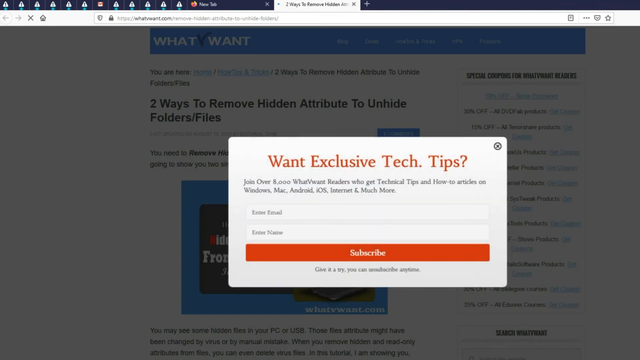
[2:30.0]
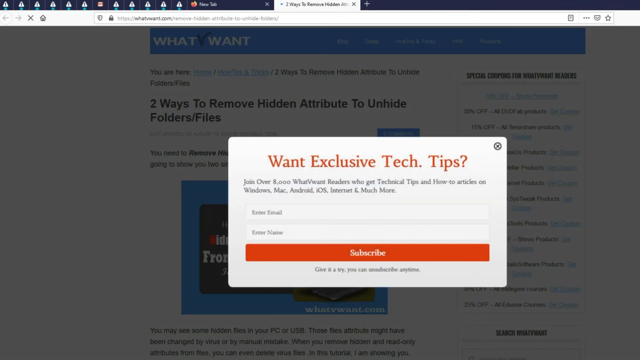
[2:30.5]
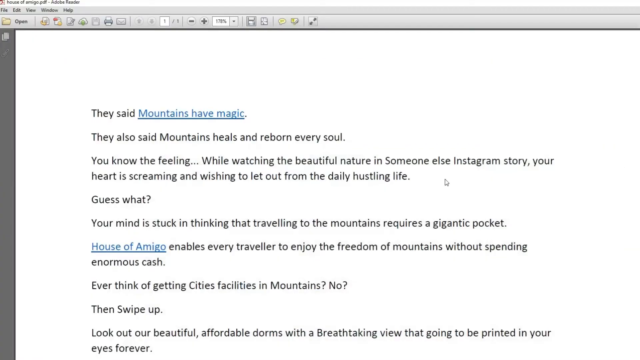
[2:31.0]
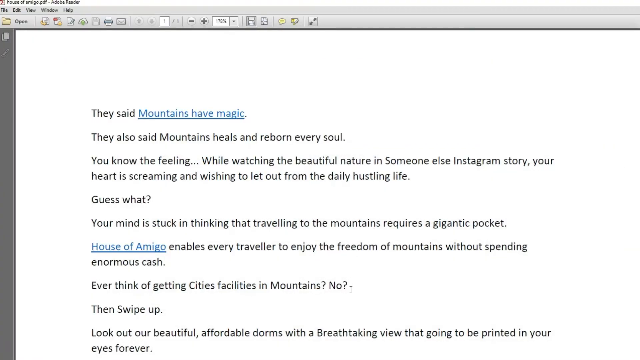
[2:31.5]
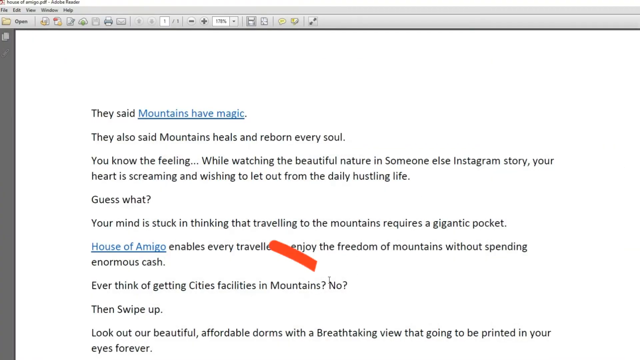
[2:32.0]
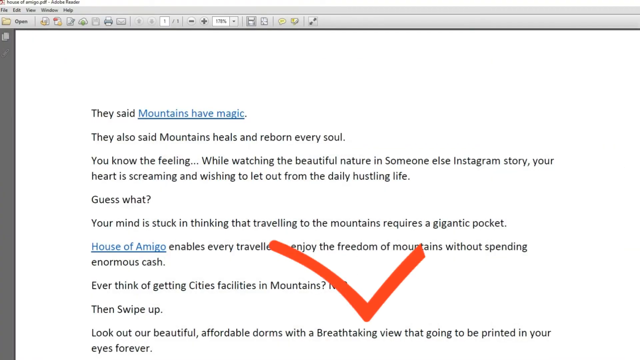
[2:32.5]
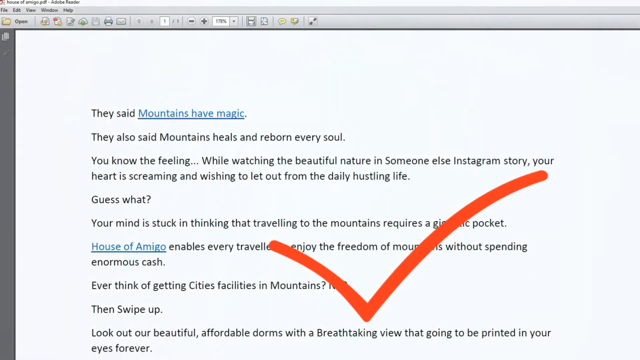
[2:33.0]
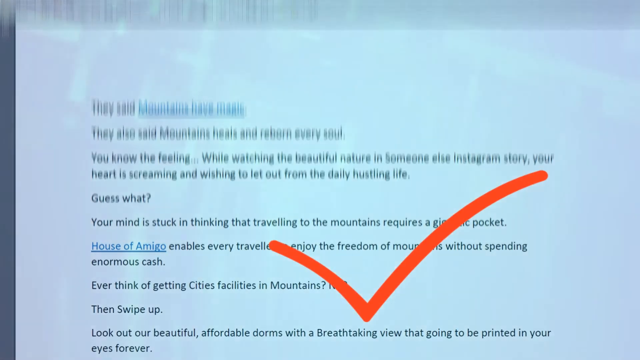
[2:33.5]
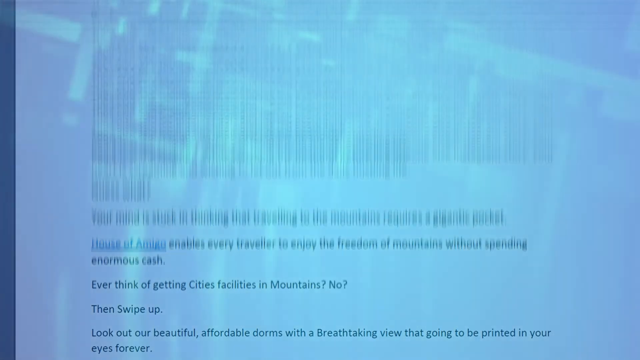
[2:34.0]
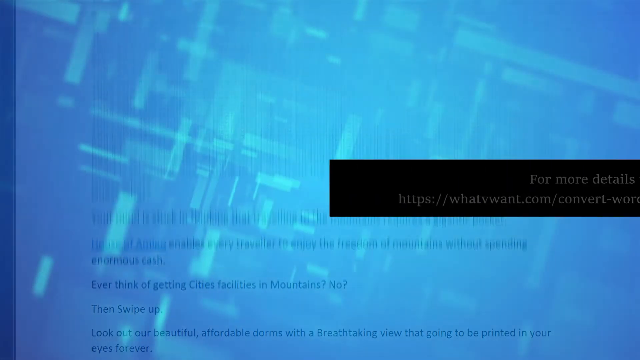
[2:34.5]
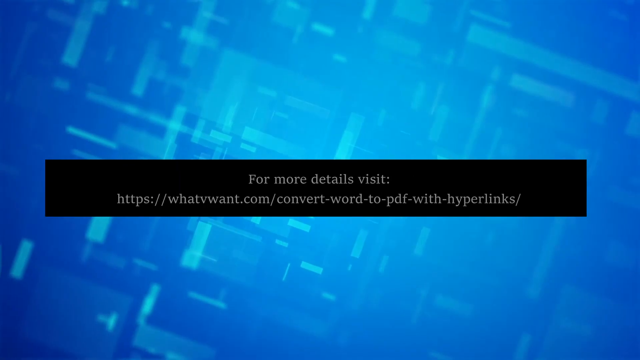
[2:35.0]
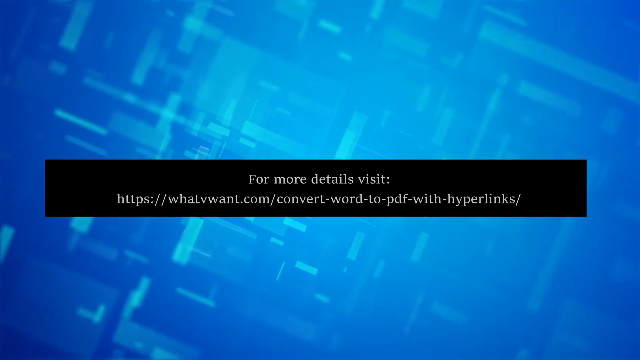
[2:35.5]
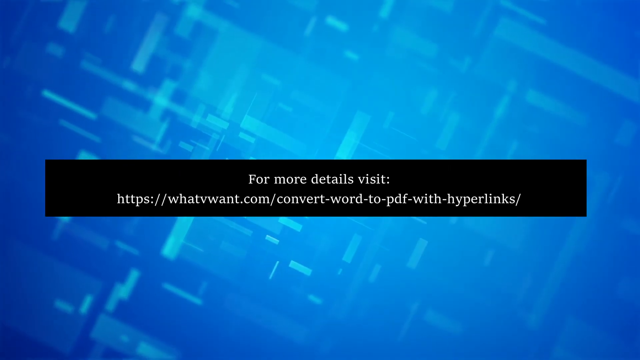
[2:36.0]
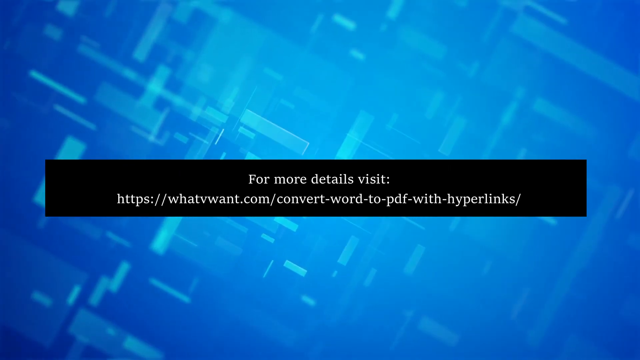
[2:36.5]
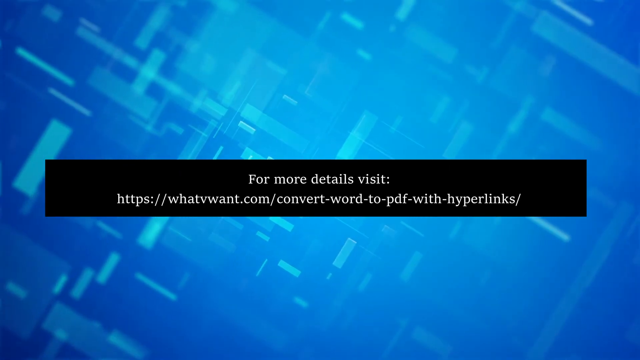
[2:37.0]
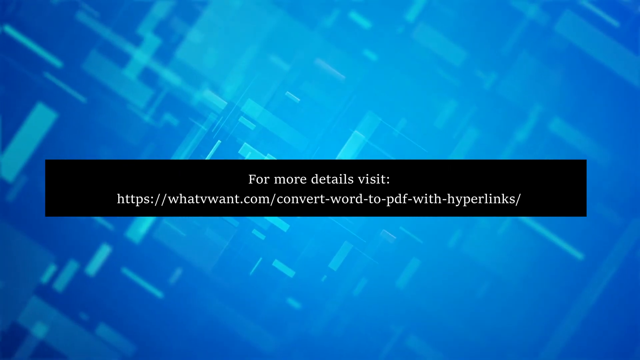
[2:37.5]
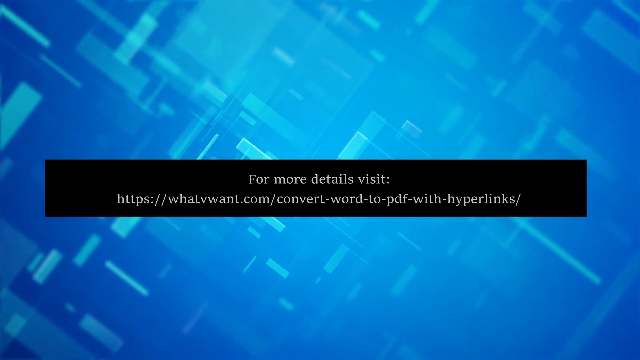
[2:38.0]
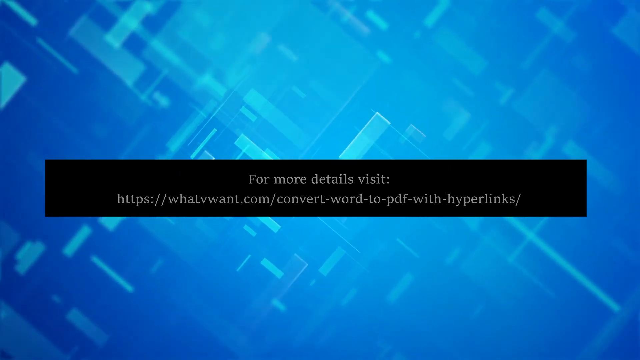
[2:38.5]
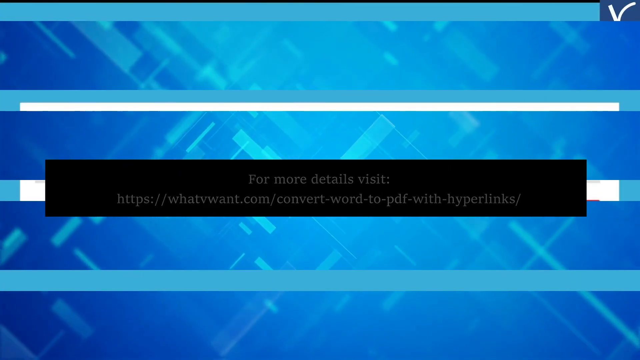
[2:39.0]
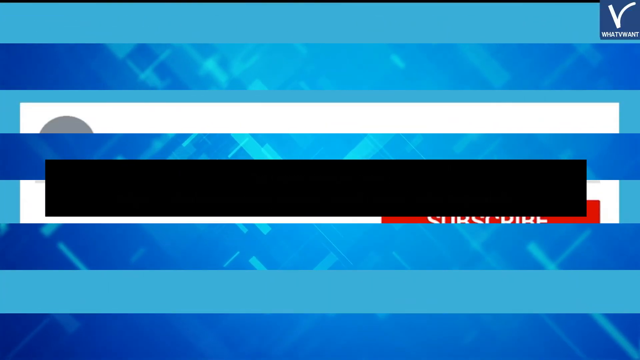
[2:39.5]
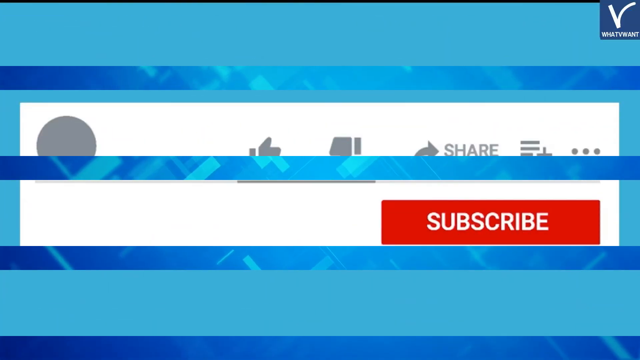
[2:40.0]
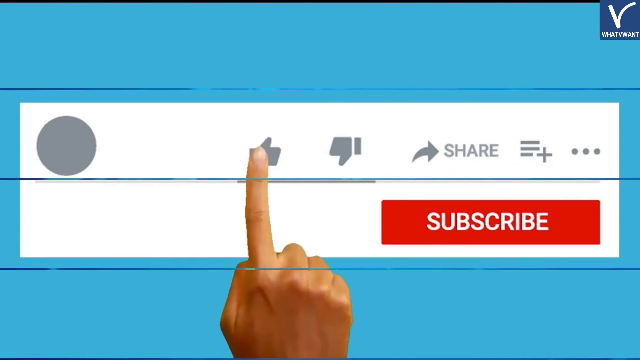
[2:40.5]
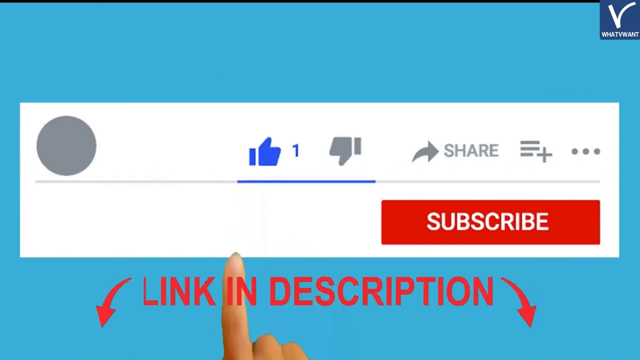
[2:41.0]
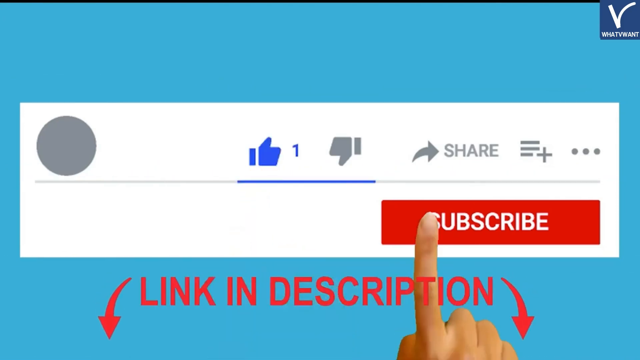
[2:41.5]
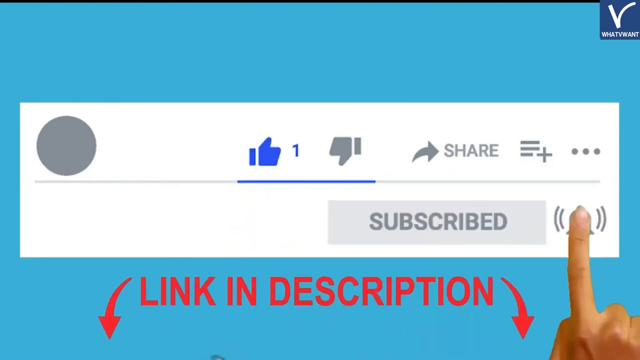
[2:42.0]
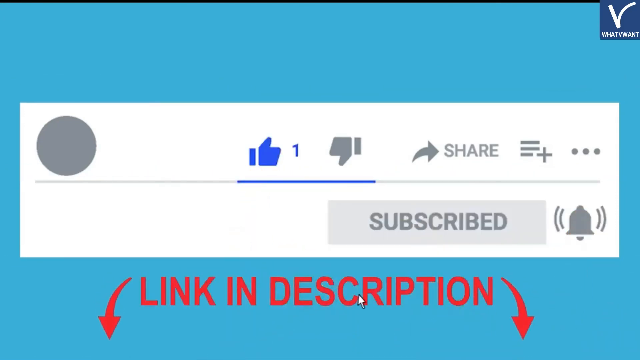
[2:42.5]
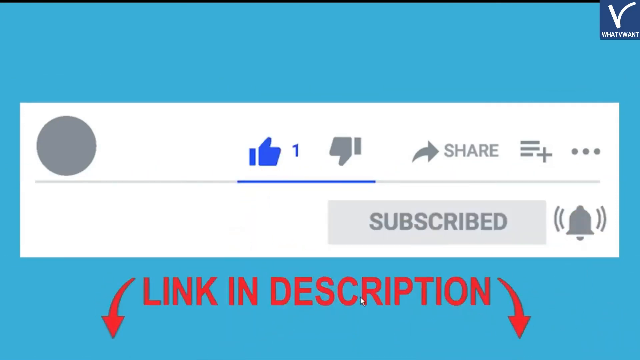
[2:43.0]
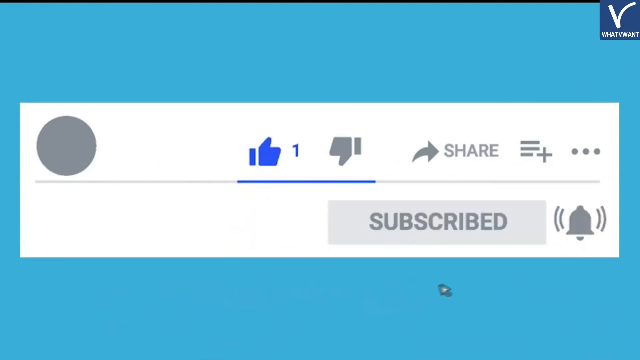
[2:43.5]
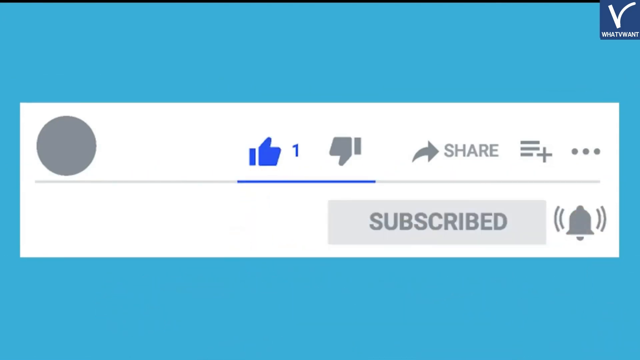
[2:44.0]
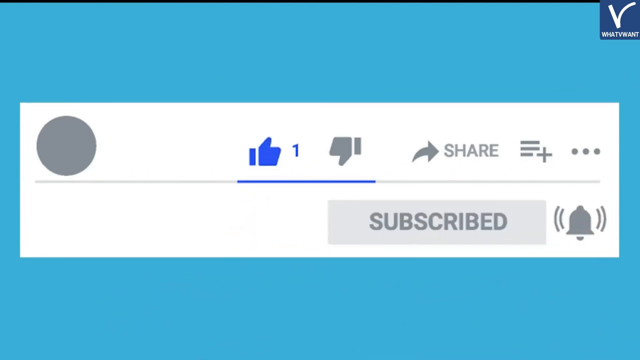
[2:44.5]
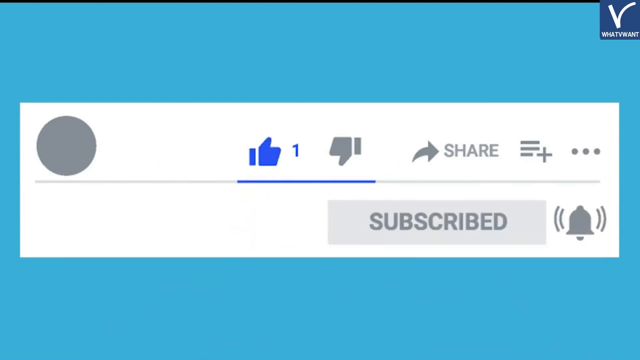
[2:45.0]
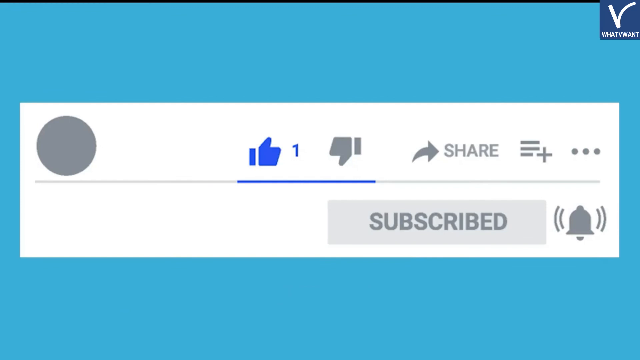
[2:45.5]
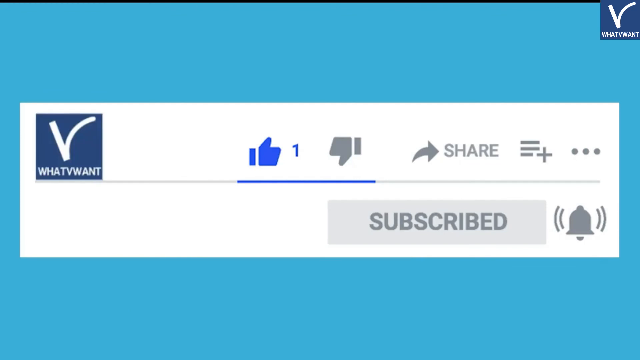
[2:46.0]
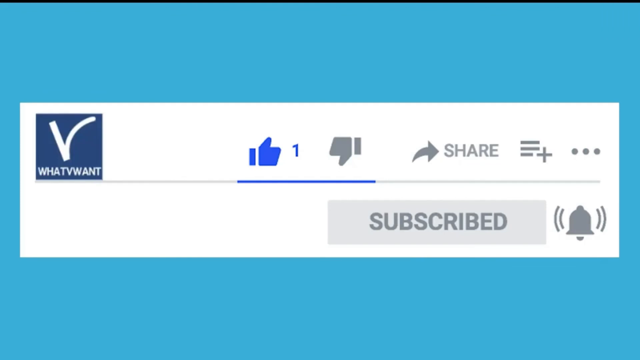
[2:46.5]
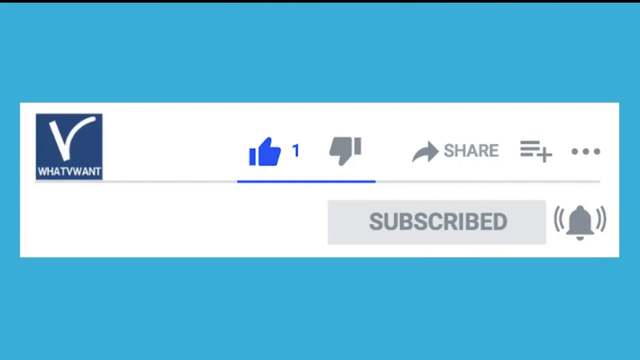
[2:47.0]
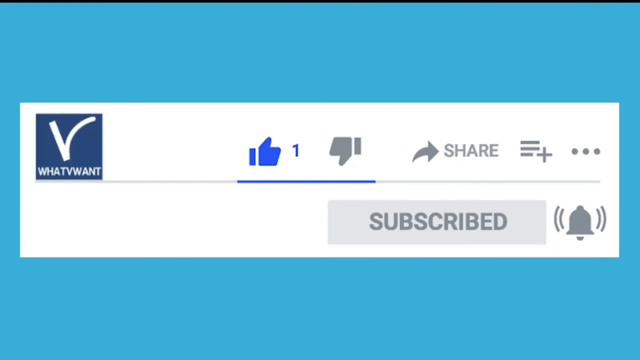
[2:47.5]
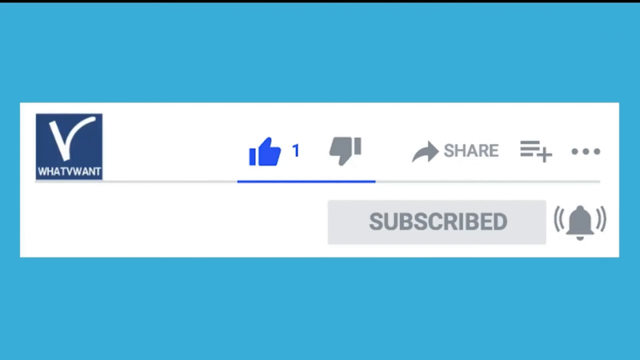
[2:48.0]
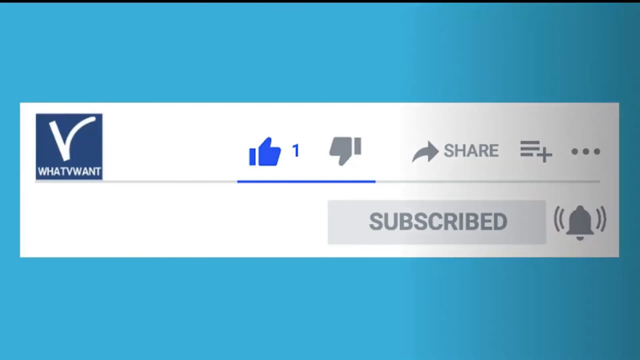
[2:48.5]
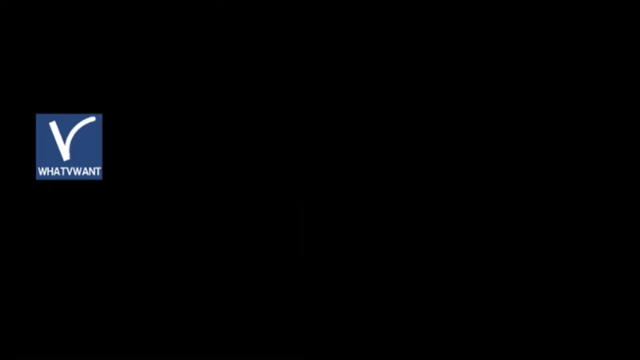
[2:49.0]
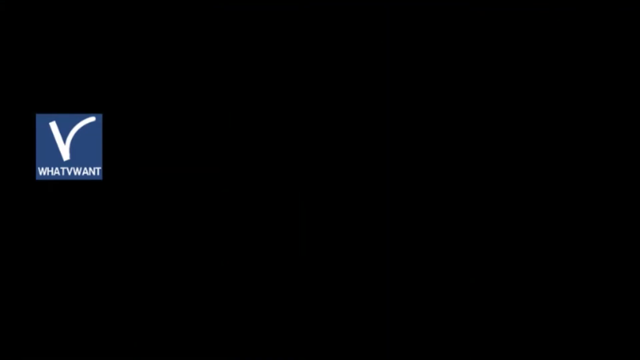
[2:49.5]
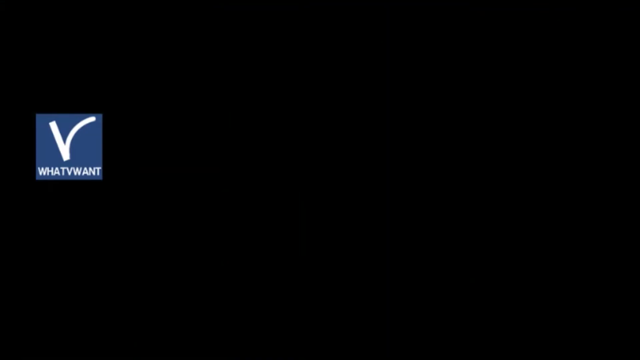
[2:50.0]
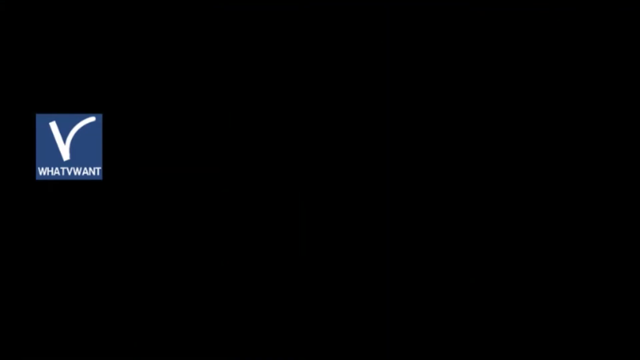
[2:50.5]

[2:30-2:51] The Word document is shown again, followed by a large red V-shape. The video transitions to the blue background with rotating rectangles, where a black rectangle holds white text reading "for more details visit:", with a URL underneath: "whatwewant.com/convert-word-two-pdf-word-hyperlinks". The text fades away, and a white rectangle appears that looks like part of the YouTube interface. A hand with an index finger moves onto the like button, which becomes a blue thumbs up with a 1 next to it. Beside it are a grey thumbs down button, then "share", "add playlist" and three dots, and underneath is a red subscribe button with white text. Below the rectangle, large red capital letters read "link in description", with two red arrows on either side; the background of the entire page is light blue. The hand moves over the subscribe button and presses it, and it reads "subscribed" in dark grey text on a light grey background. The hand then moves over to the bell icon and presses it, and the "link in description" text disappears. At the top left of the white rectangle an avatar logo appears reading "what we want": a V in white on a blue background with the text "what we want" underneath. Everything else then disappears into a black screen, leaving the logo as the only thing on screen.